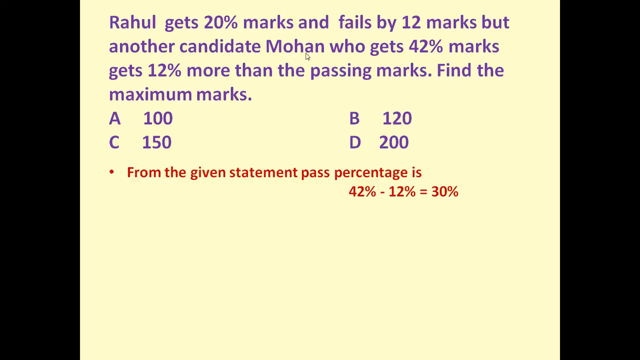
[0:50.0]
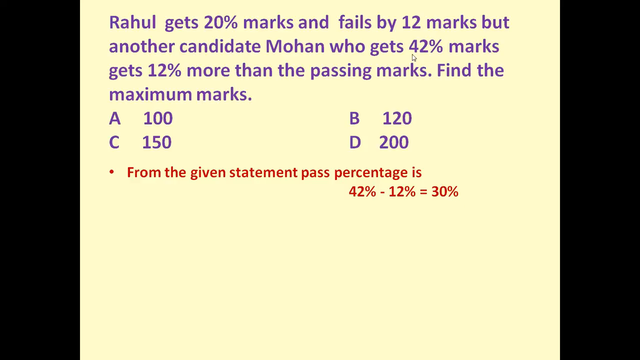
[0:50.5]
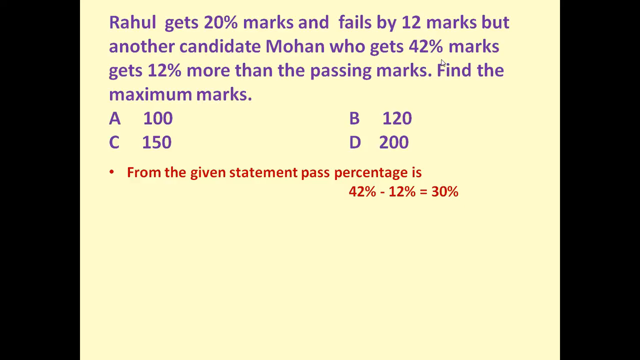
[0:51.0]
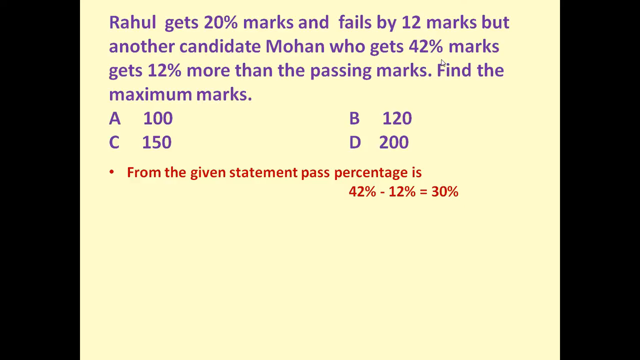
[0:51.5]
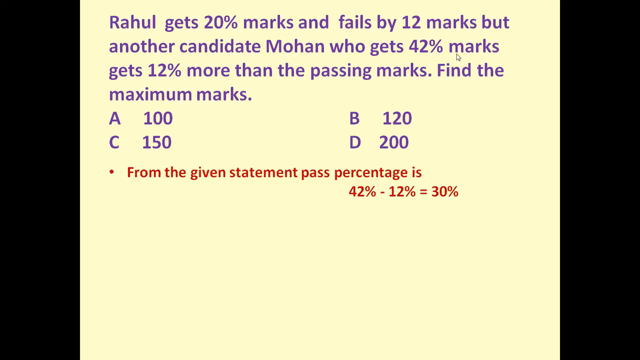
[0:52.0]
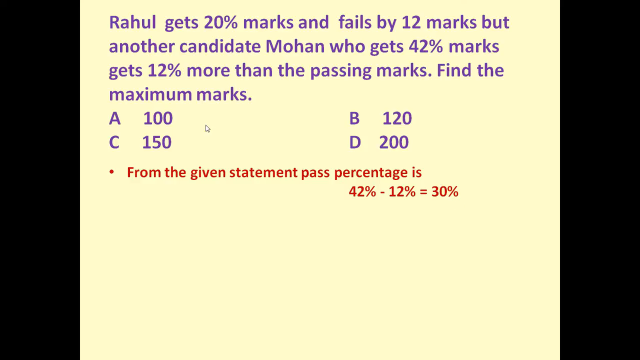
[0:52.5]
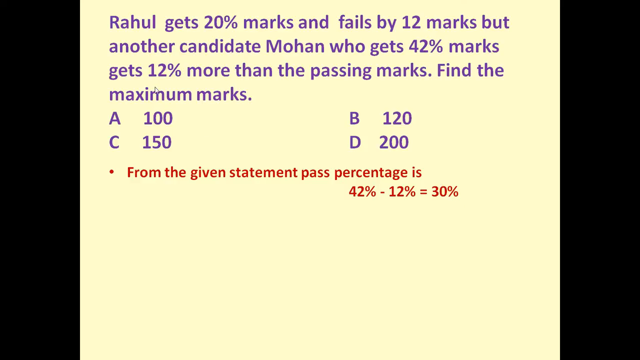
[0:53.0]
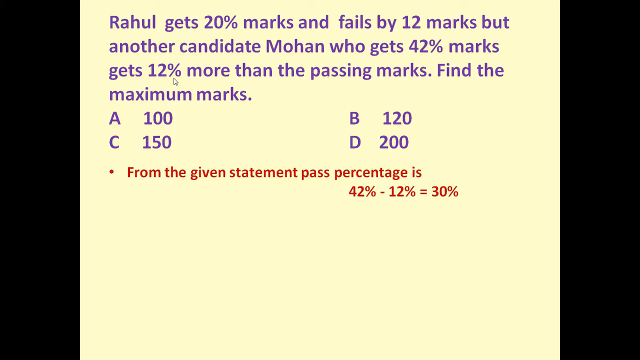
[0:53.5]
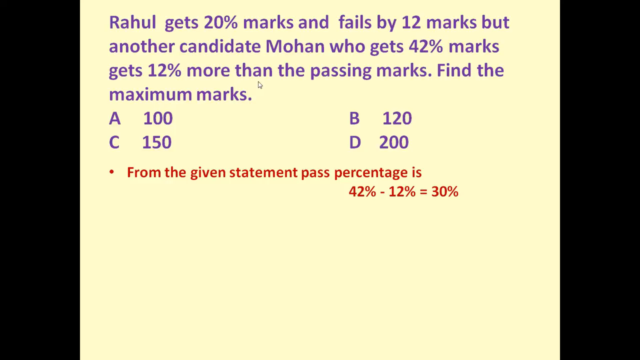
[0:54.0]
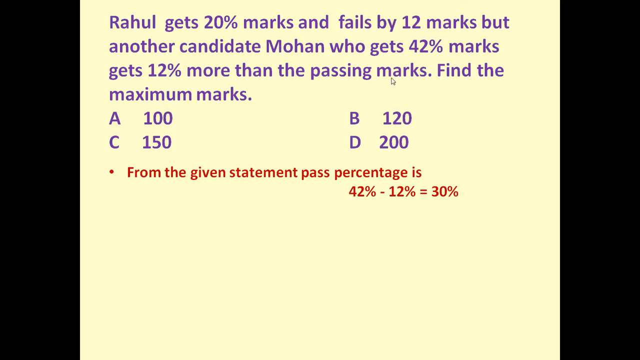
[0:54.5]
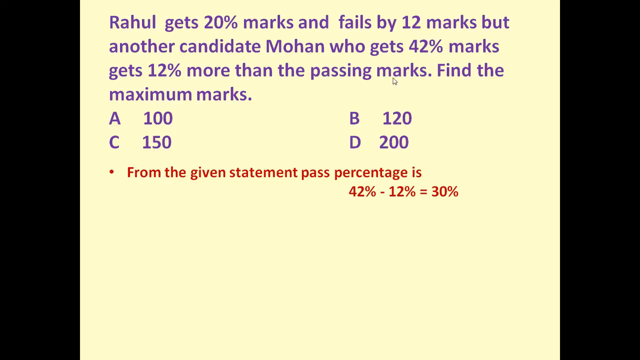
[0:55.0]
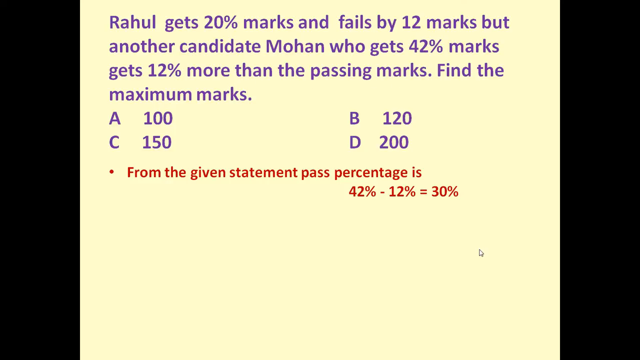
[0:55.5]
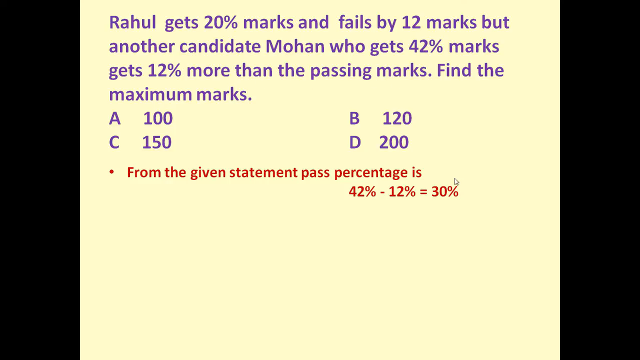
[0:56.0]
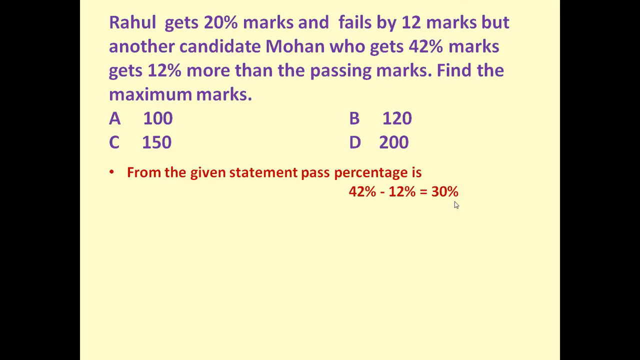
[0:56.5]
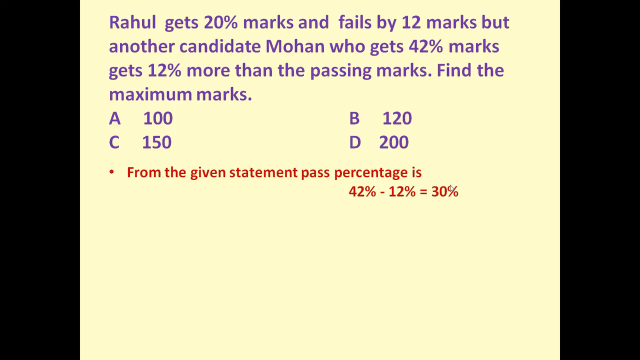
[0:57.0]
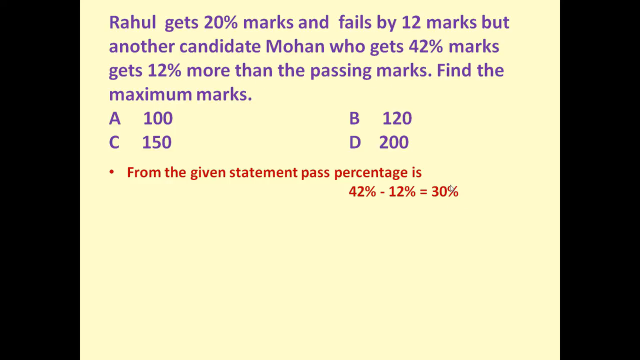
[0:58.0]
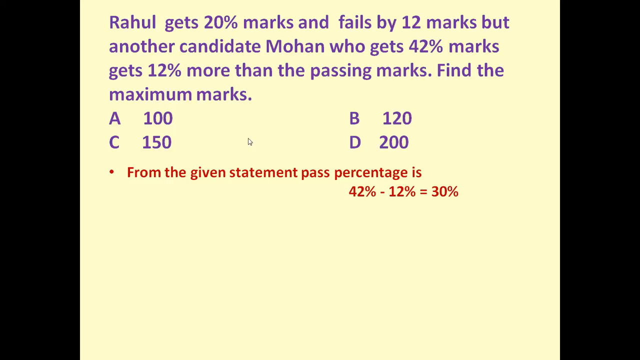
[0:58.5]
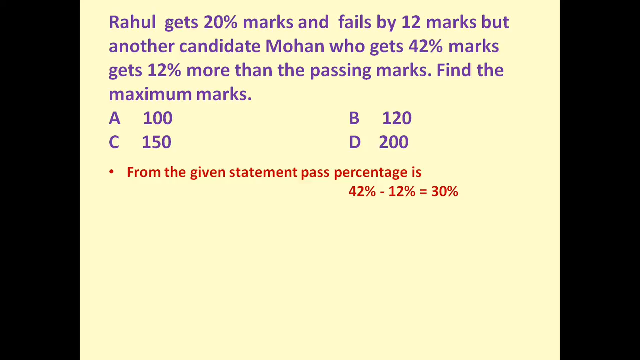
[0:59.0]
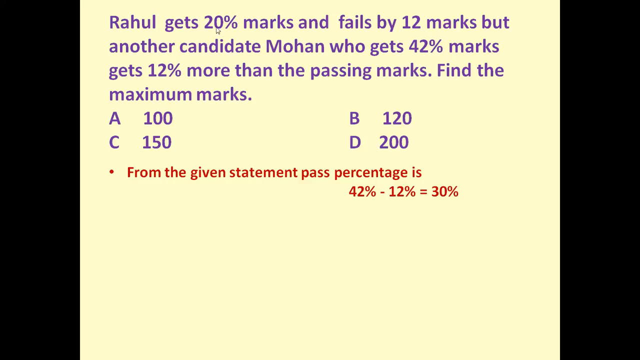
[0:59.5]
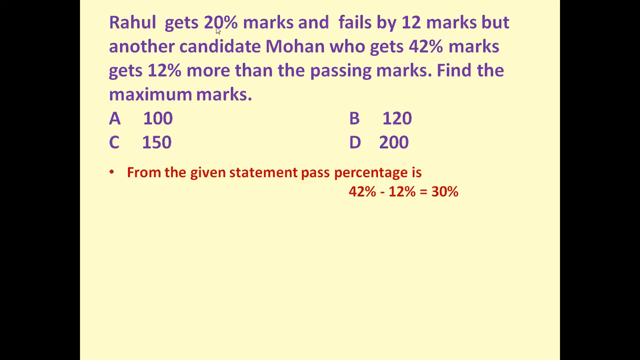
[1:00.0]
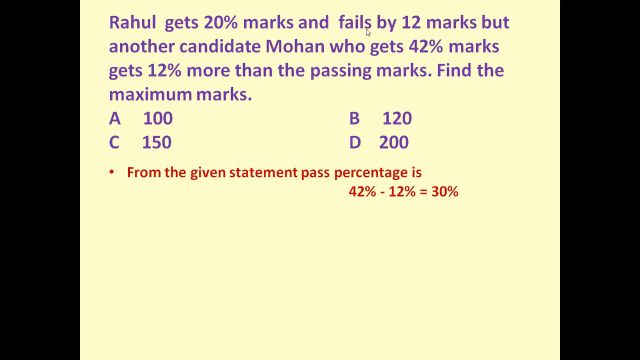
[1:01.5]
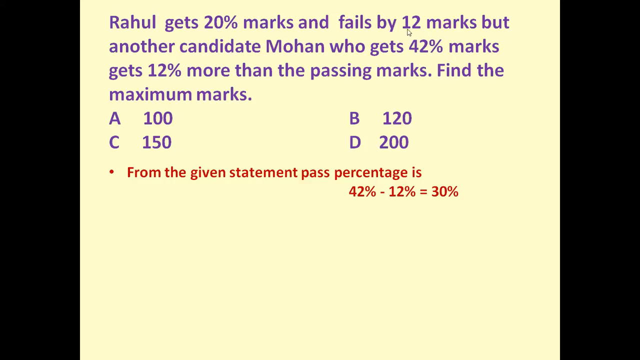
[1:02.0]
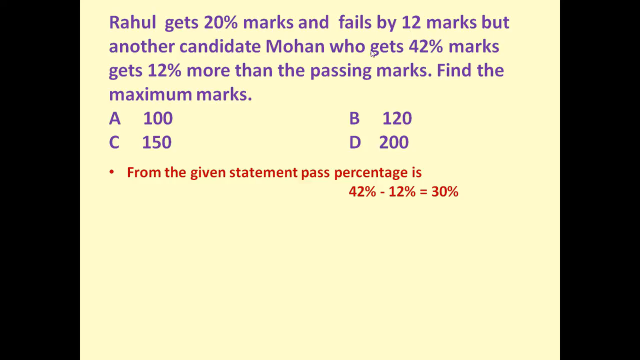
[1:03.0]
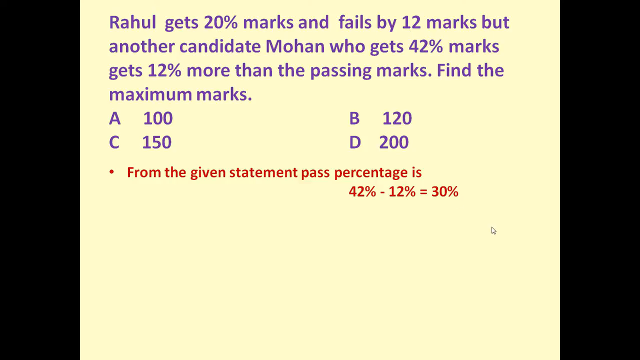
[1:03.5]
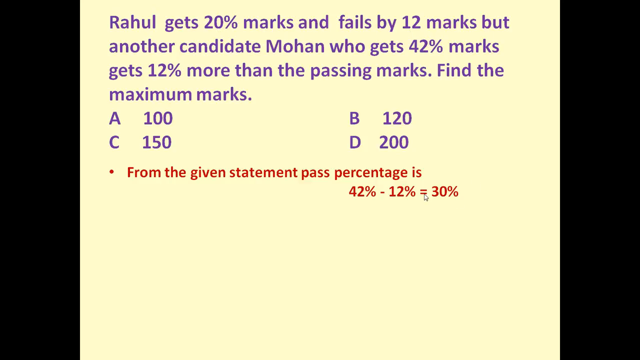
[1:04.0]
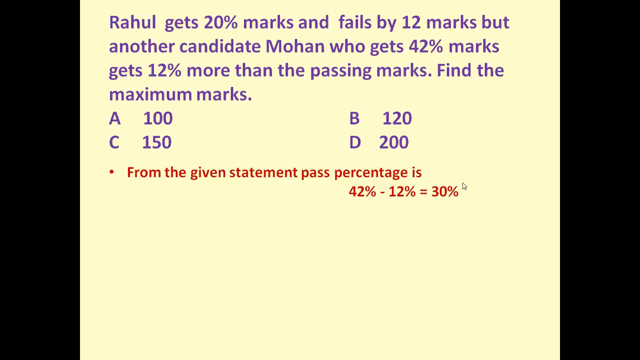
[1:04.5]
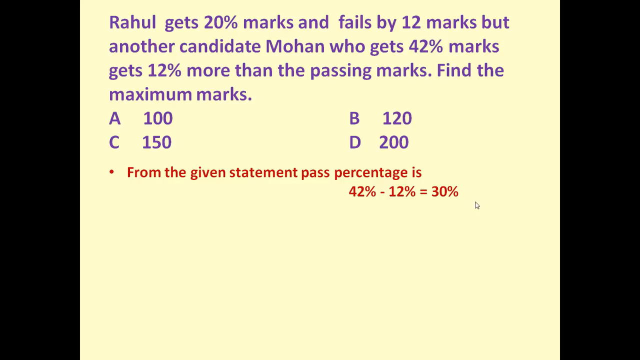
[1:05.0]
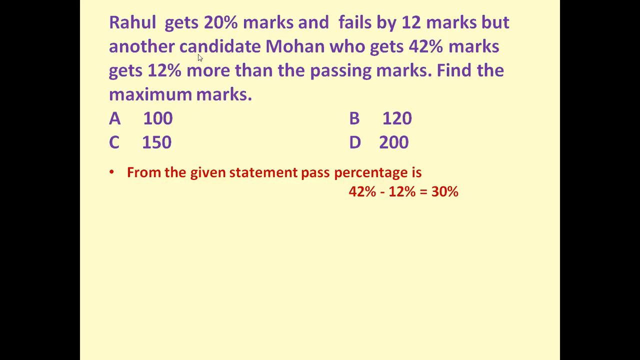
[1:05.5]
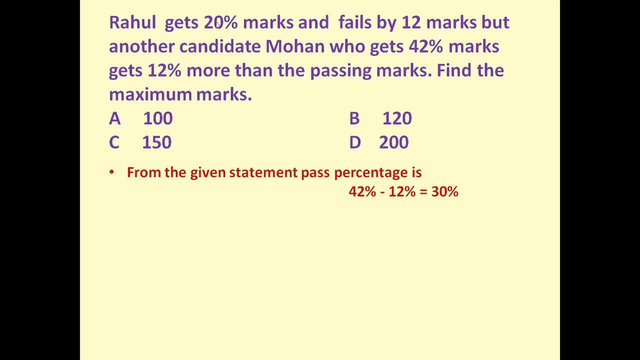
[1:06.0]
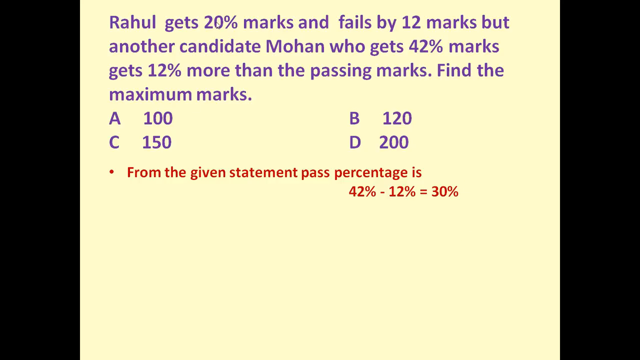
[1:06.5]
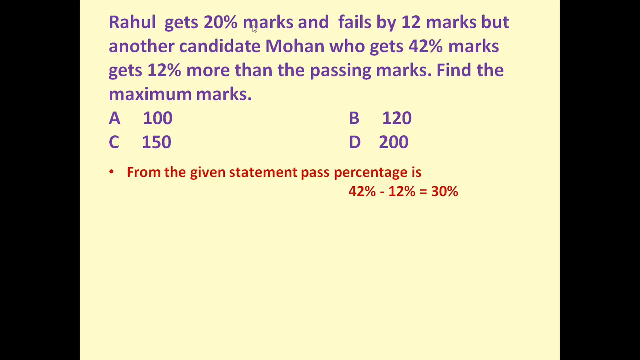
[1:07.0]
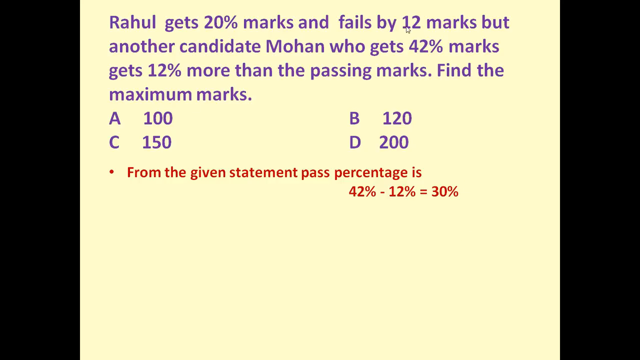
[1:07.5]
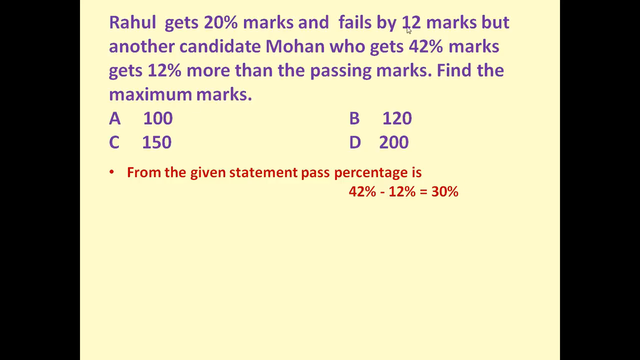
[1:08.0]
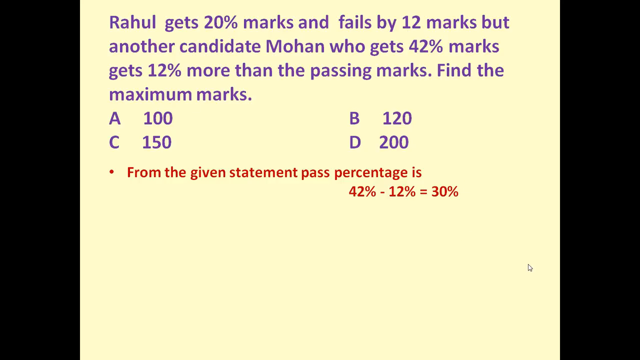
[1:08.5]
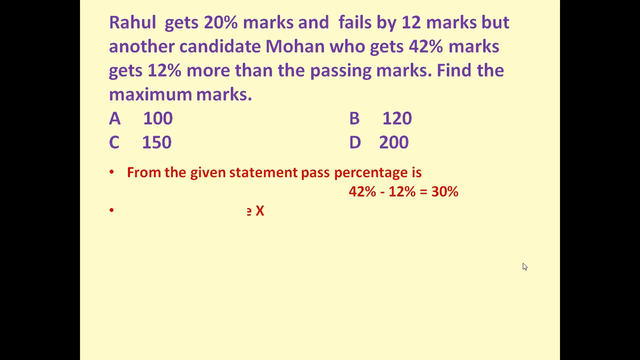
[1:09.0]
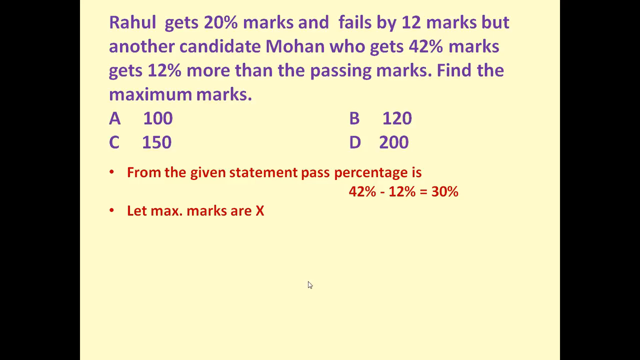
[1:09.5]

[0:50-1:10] The same problem about Raul and Mohan is shown with its four options: A, 100; B, 120; C, 150; D, 200. The working states that the pass percentage is 42% minus 12%, which is 30%, because Mohan gets 42% marks, which is 12% more than the passing marks. The solution then turns to Raul, who gets 20% marks and fails by 12, and the maximum marks are set as X.